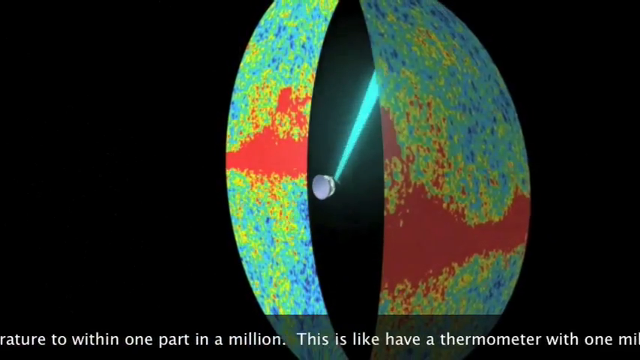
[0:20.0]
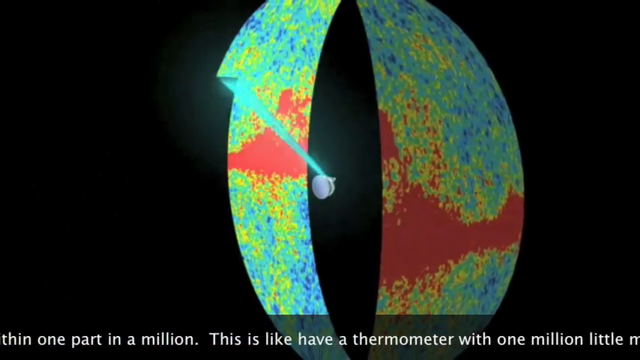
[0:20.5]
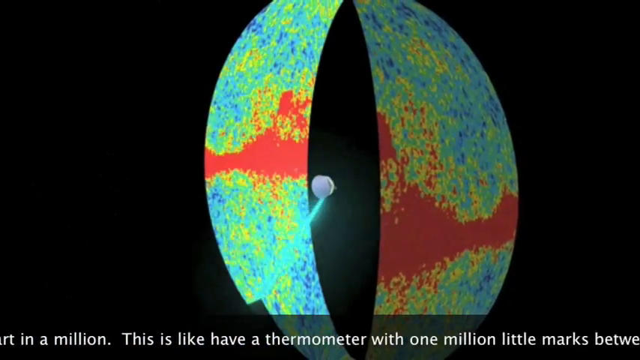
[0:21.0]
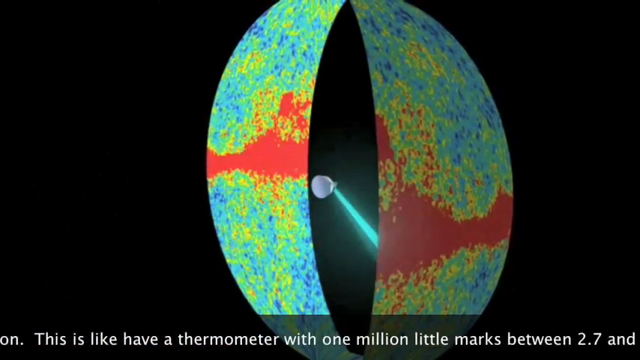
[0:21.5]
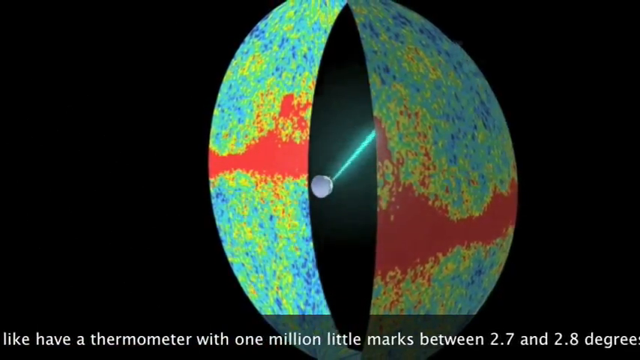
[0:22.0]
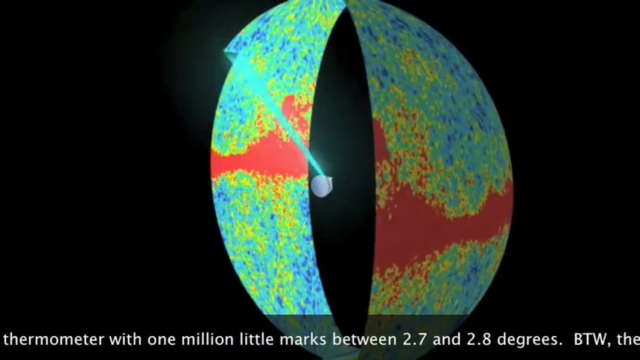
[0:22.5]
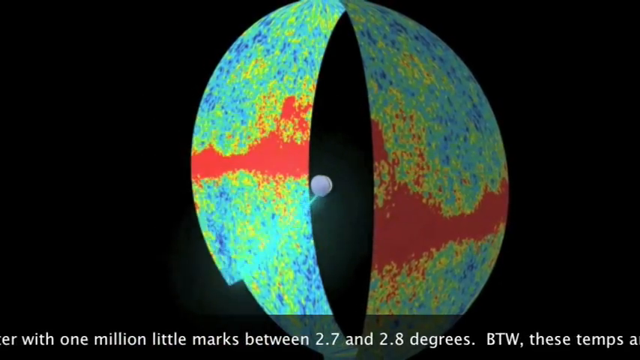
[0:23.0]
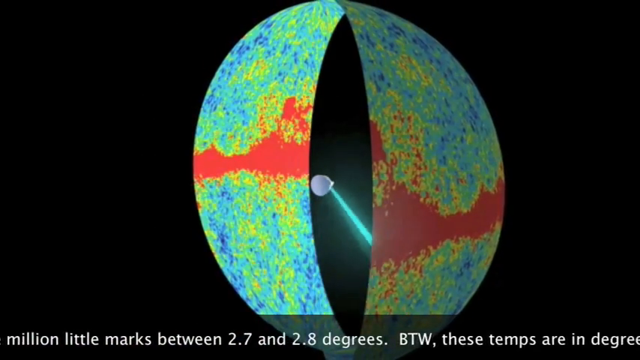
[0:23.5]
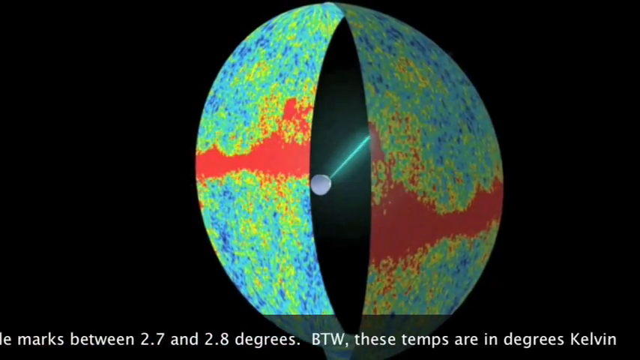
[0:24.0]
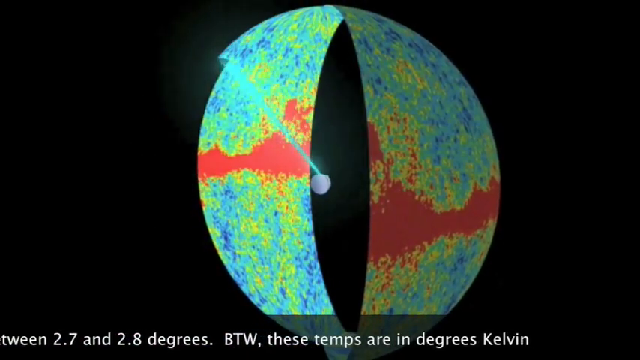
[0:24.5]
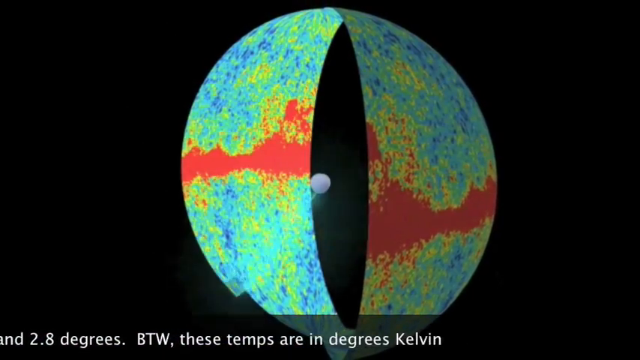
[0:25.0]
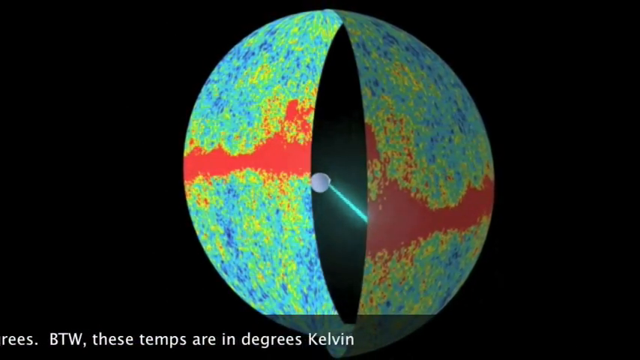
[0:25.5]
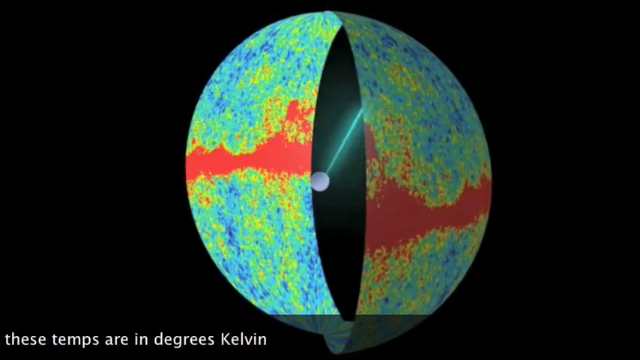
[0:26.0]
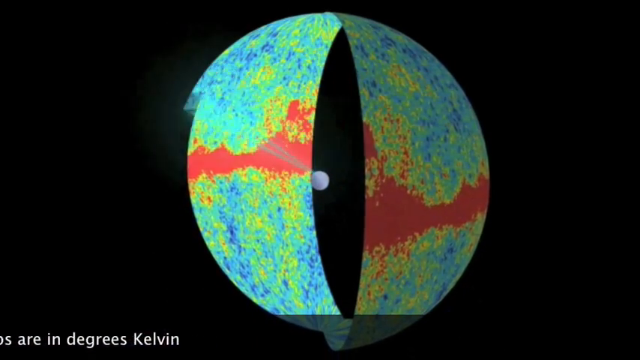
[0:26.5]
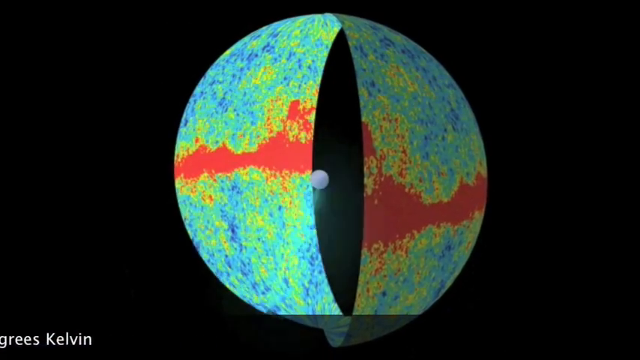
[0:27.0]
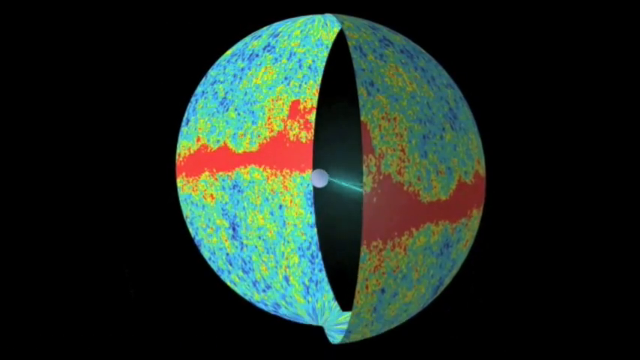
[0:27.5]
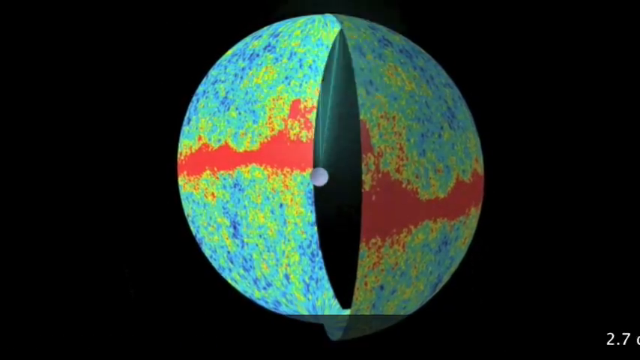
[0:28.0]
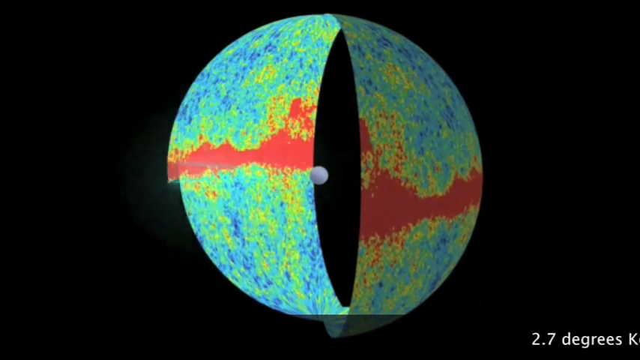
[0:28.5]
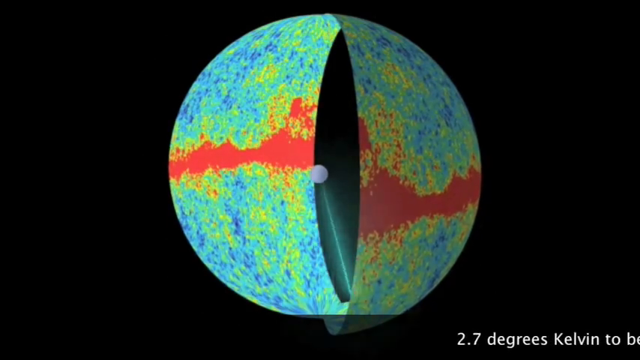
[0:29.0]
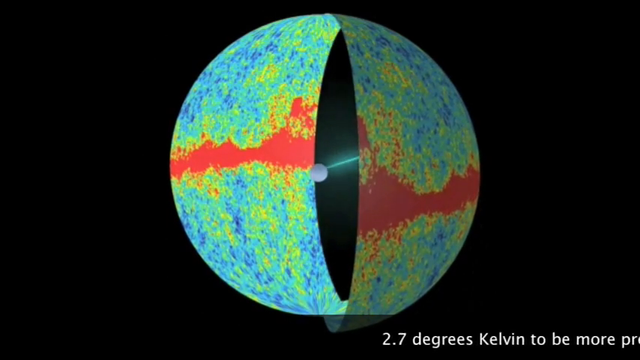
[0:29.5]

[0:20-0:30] The device, which is kind of flat-looking, appears to be depicted spinning in space. It spins around in circles counterclockwise, forming a large multicolored structure that is round and kind of an open tubular shape, looking almost like a tunnel. The device in the middle shoots out a beam of light and kind of builds up the structure layer by layer, making it wider as it keeps rotating counterclockwise.